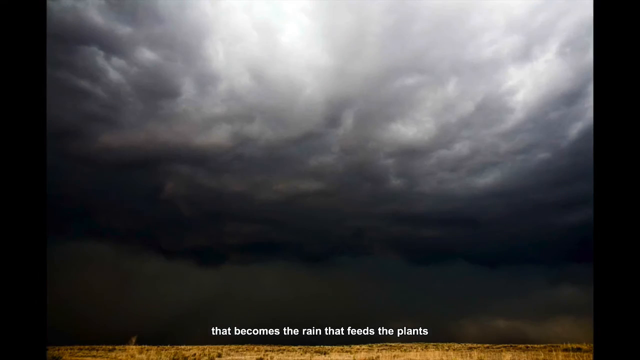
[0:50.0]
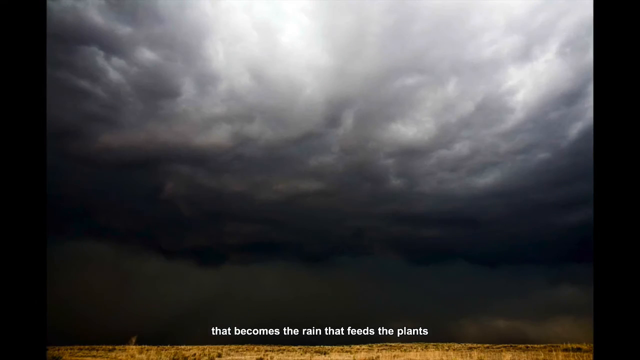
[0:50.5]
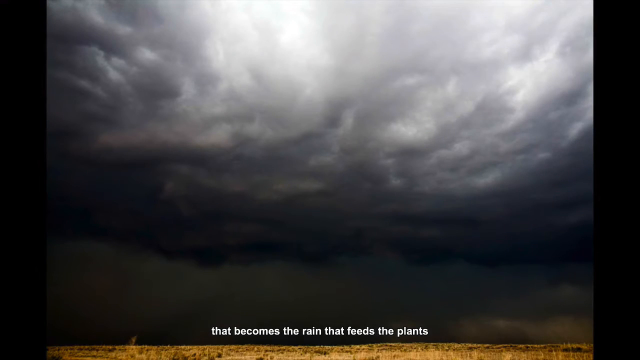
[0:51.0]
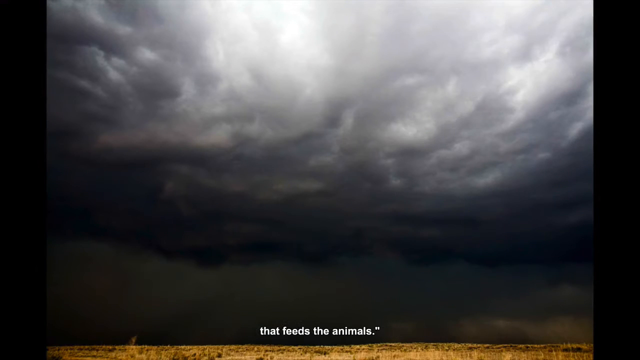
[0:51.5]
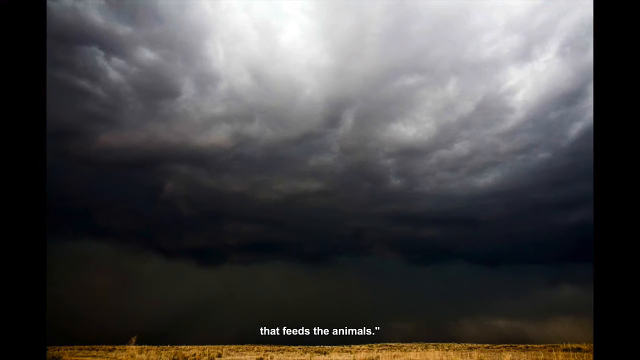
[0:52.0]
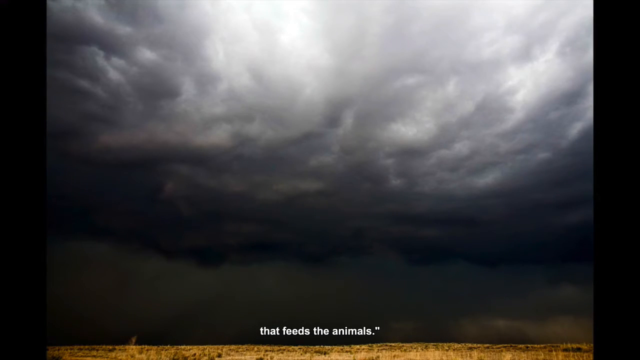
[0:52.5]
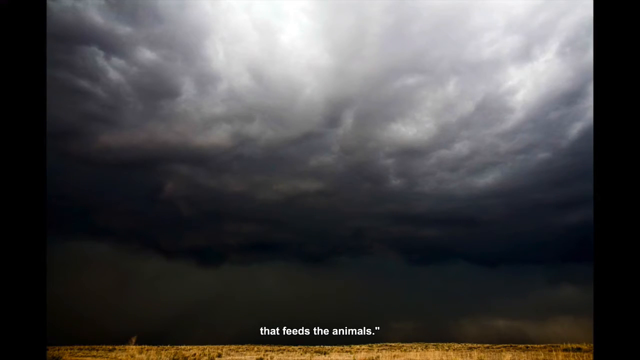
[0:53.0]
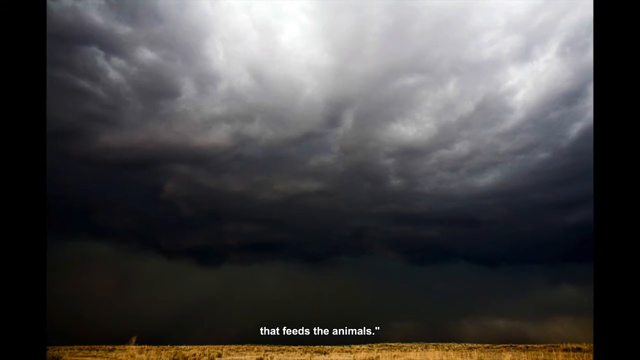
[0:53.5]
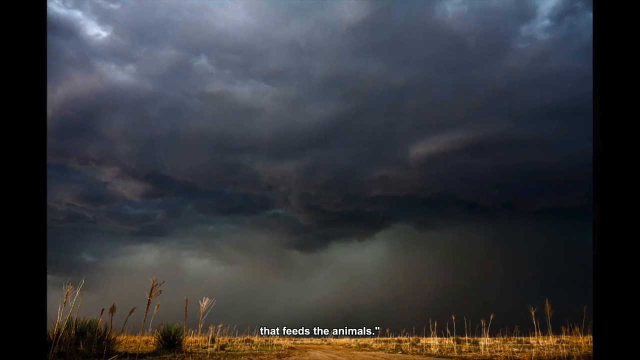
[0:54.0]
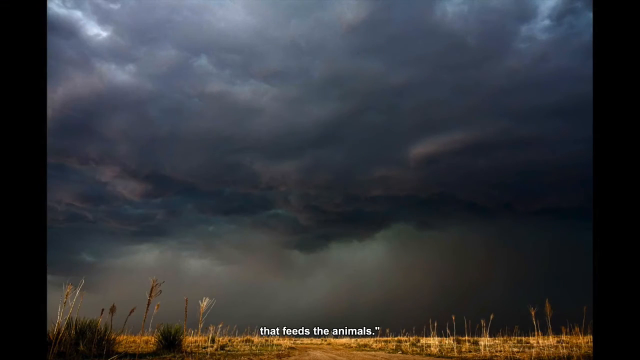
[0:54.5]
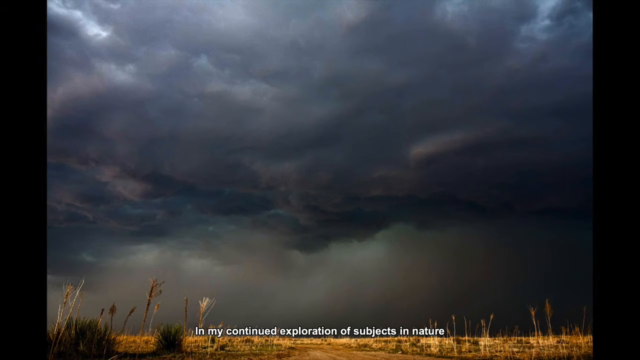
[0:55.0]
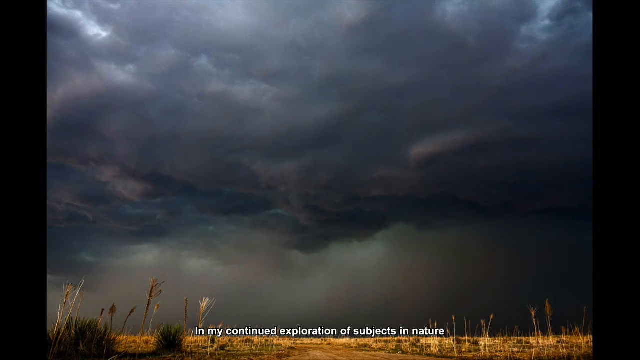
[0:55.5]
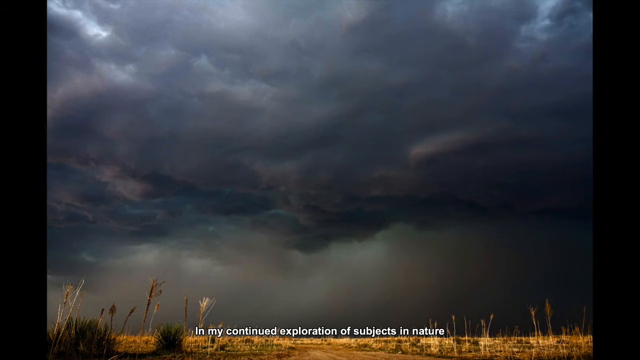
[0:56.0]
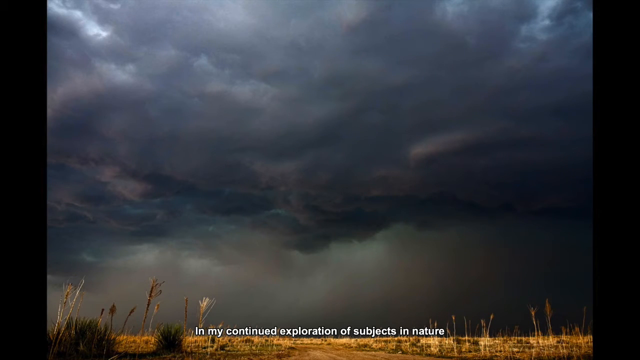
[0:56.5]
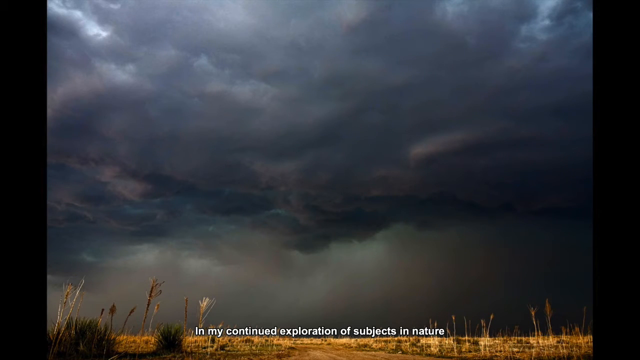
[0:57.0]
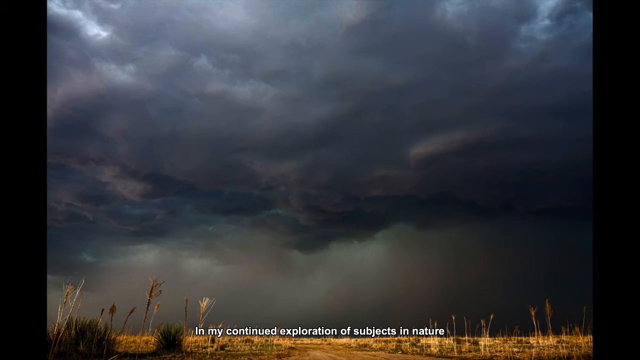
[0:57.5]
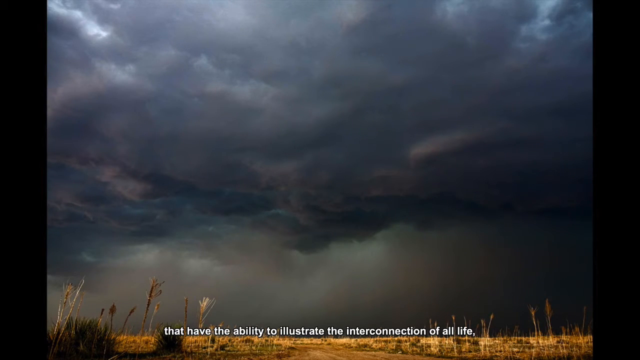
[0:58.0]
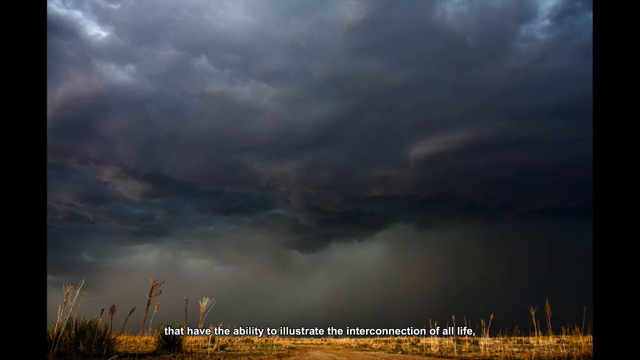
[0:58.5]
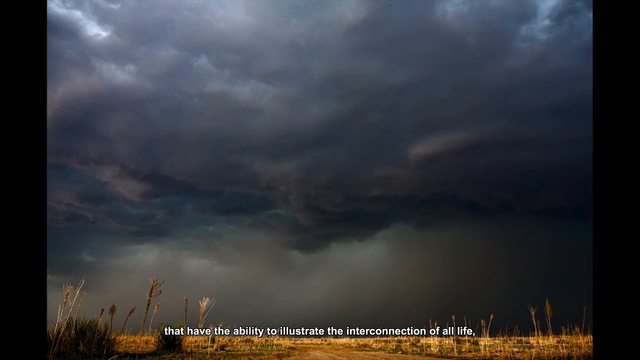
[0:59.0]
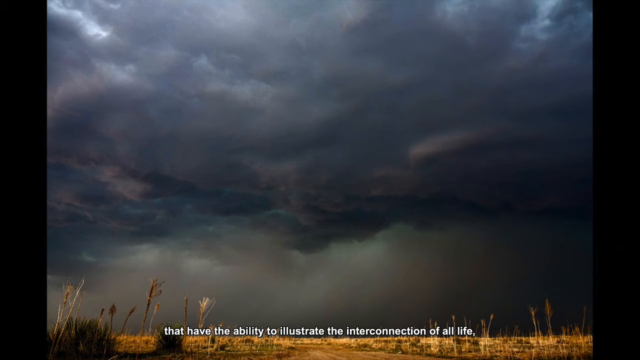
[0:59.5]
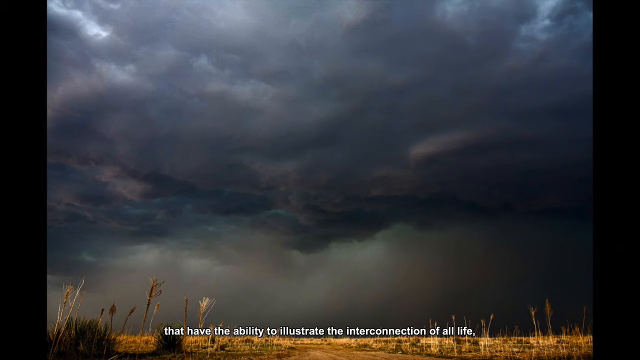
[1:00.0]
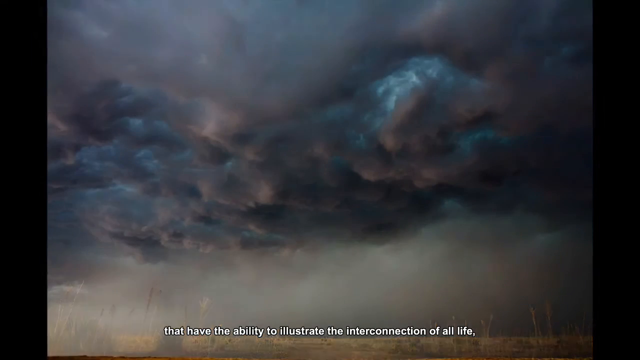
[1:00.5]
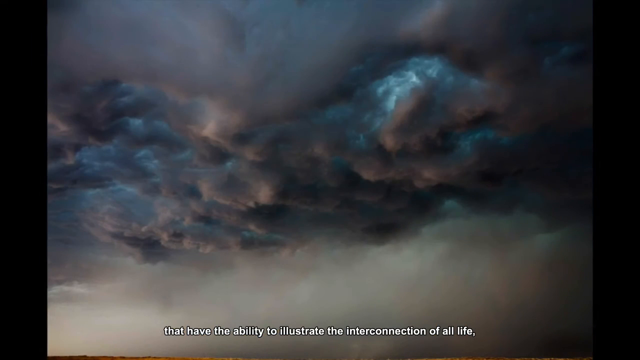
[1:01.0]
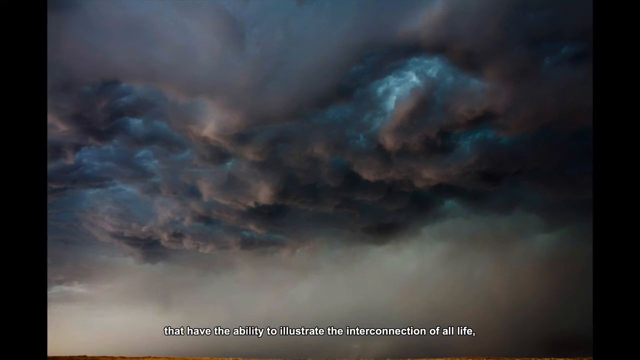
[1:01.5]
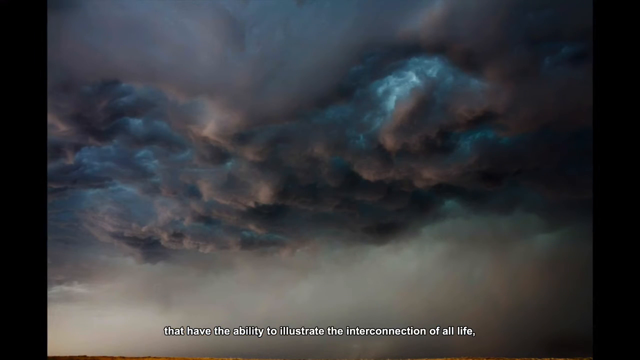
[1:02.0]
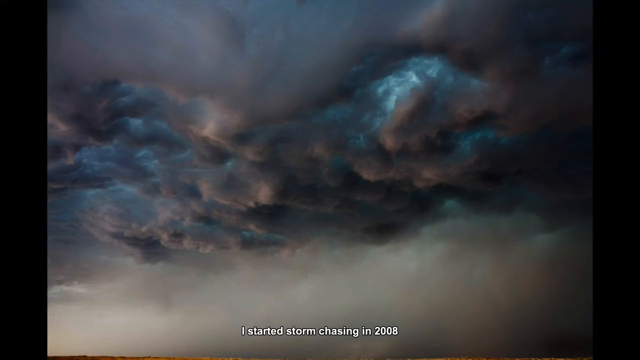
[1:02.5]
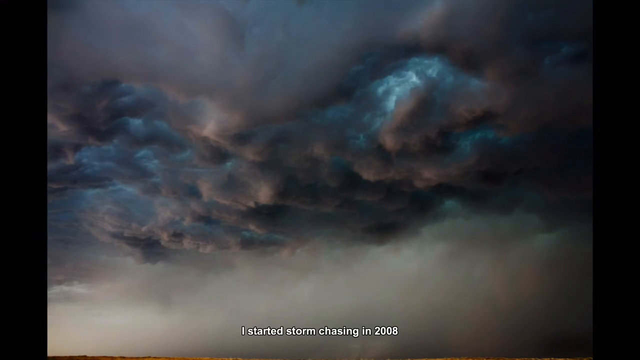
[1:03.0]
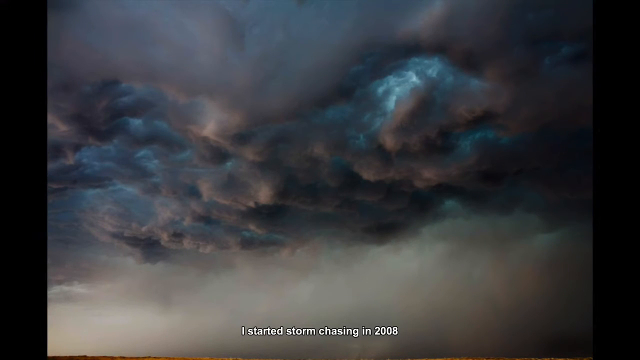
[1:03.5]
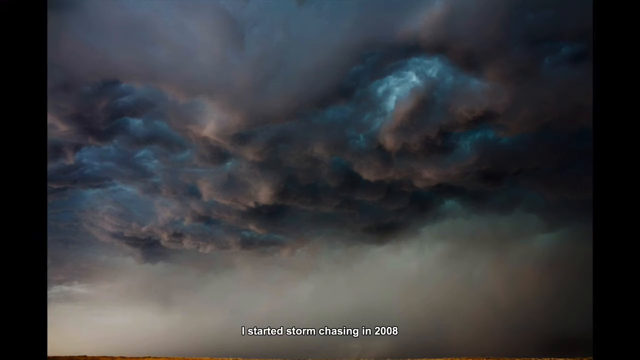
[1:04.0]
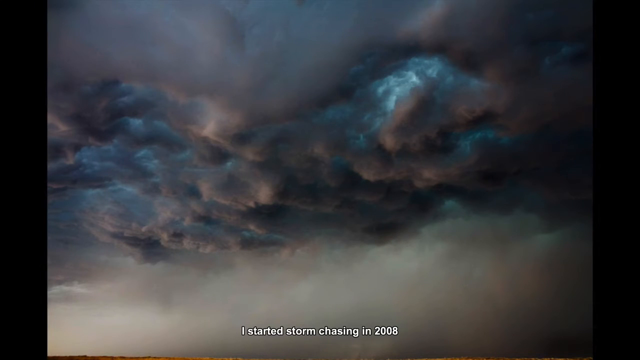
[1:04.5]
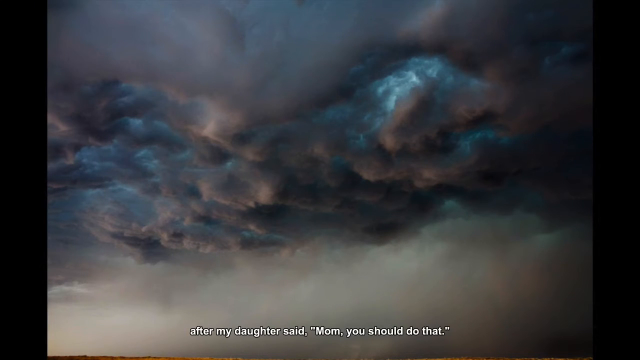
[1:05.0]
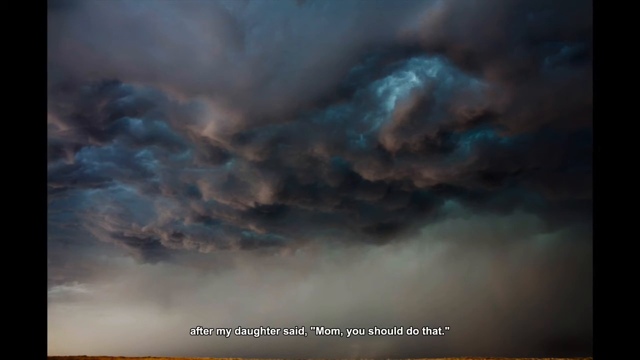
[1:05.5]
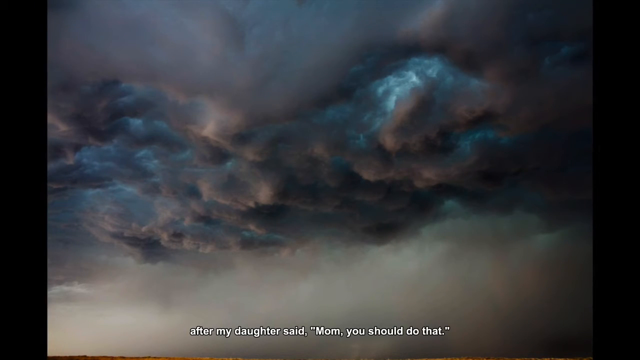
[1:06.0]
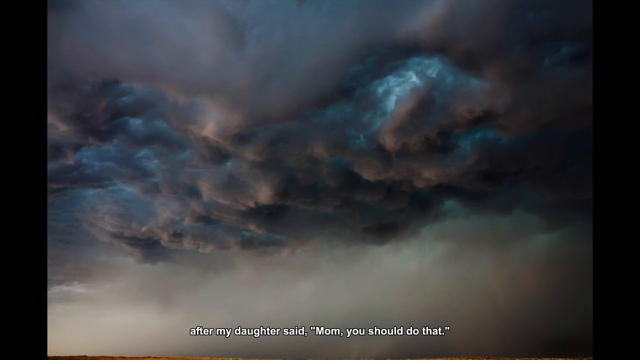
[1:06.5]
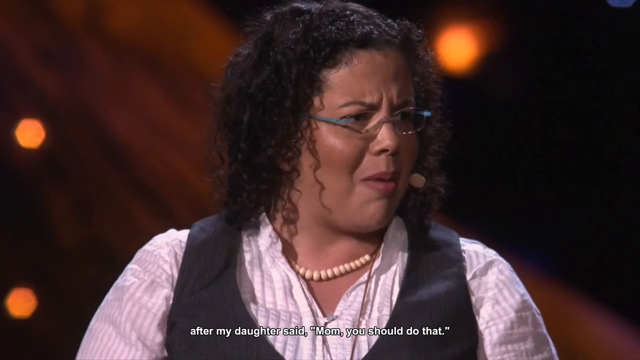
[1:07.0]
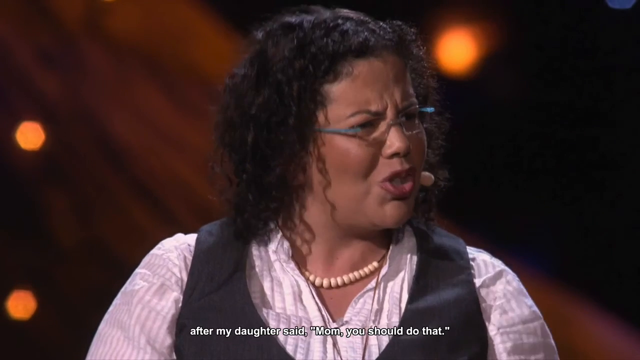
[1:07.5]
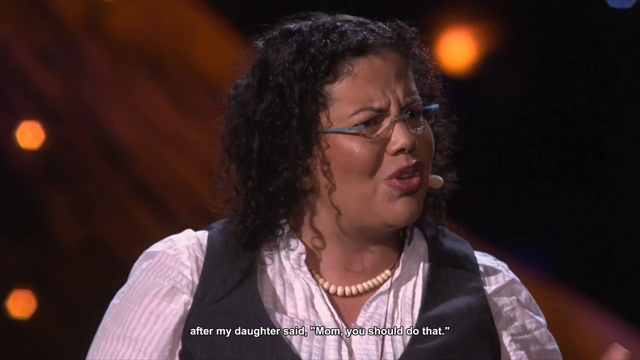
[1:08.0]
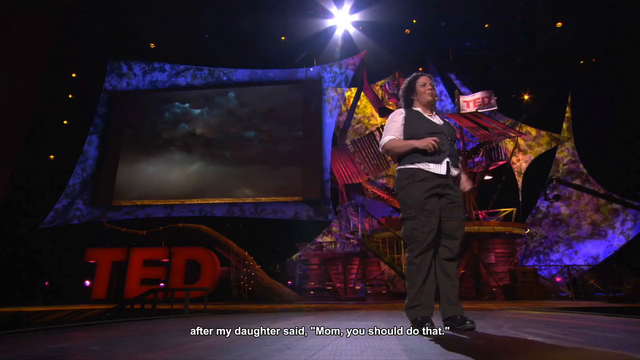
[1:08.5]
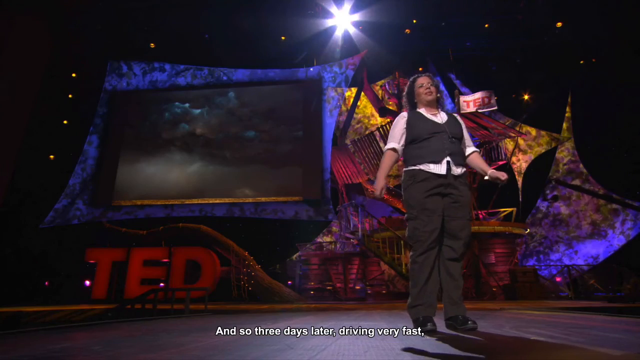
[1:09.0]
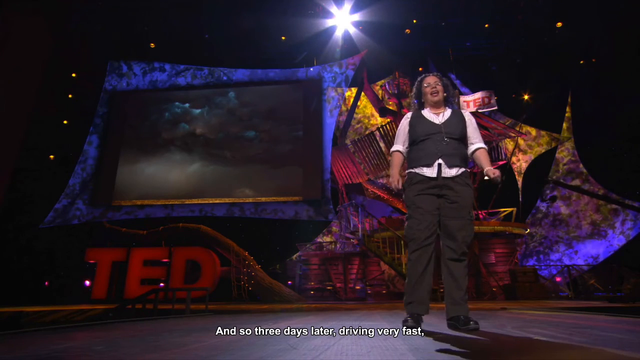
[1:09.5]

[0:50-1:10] A new image of the sky and clouds appears, much darker, with the darkness in the bottom half and the top half much brighter. Text at the bottom reads "that becomes the rain that feeds the plants, that feeds the animals." The next image is also of the sky, with much darker clouds, and unlike the others it shows dry yellow grass at the bottom. Text follows reading "in my continued exploration of subjects and nature, that have the ability to illustrate the interconnection of all life." Another image of the sky shows dark clouds with some blue light shining through them, and text at the bottom reads "I started storm chasing in 2008 after my daughter said, Mom, you should do that." The video then returns to a shot of the speaker.